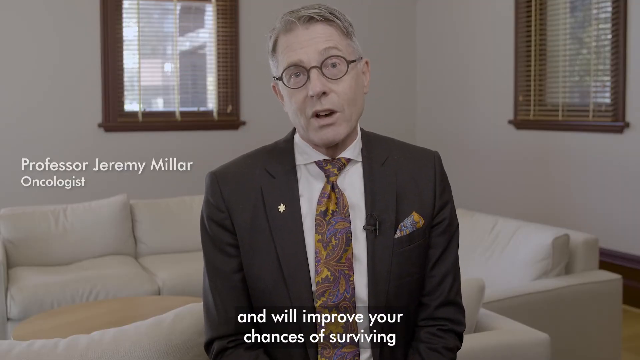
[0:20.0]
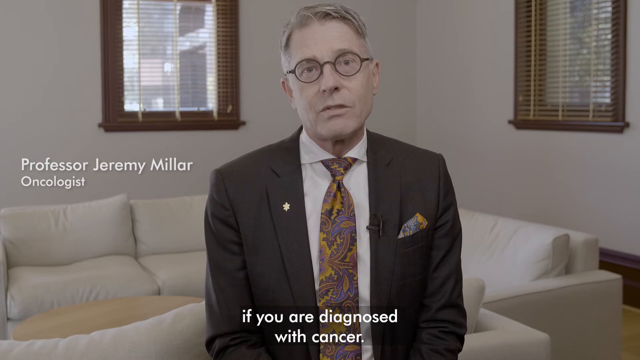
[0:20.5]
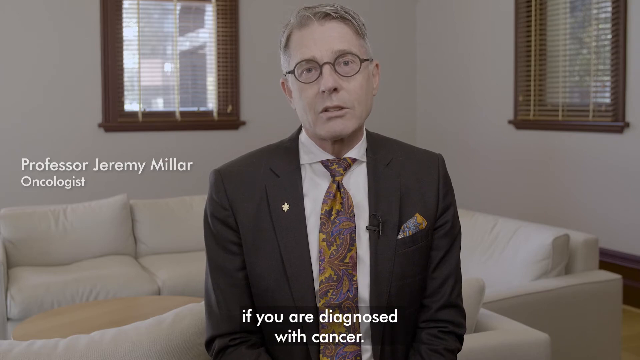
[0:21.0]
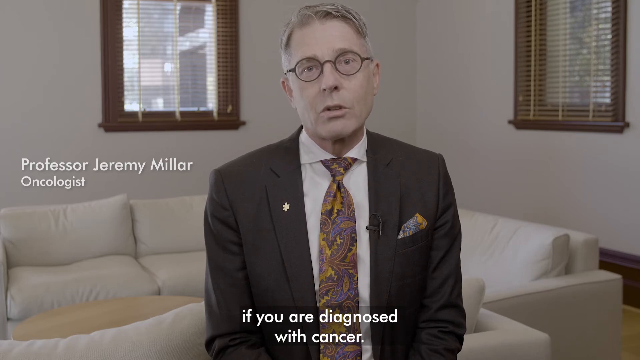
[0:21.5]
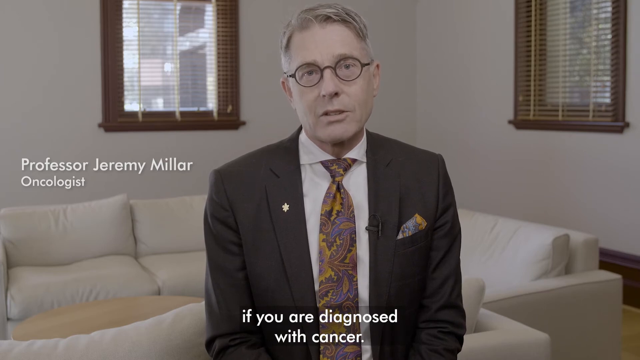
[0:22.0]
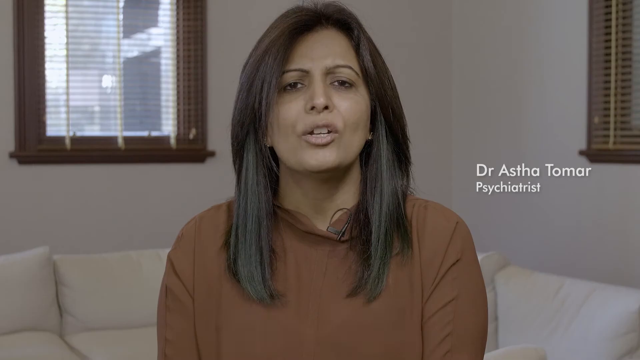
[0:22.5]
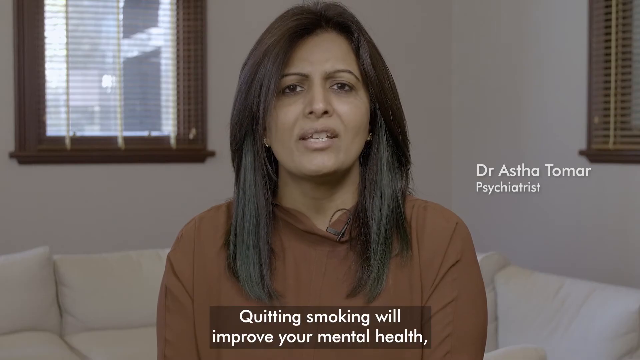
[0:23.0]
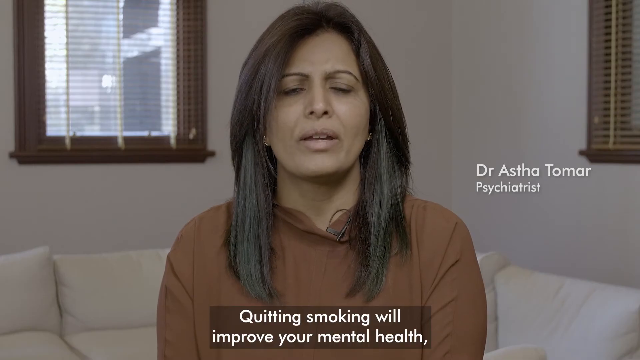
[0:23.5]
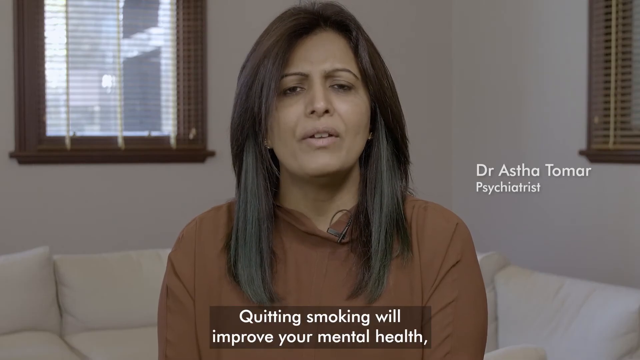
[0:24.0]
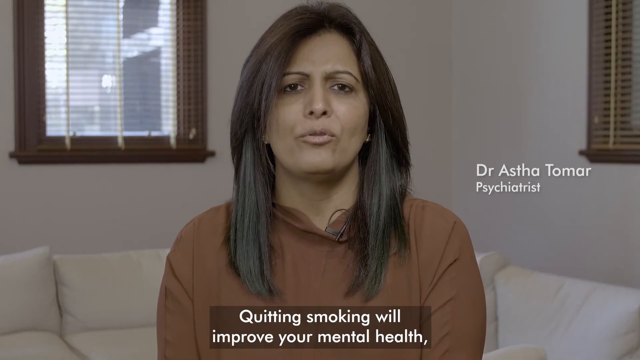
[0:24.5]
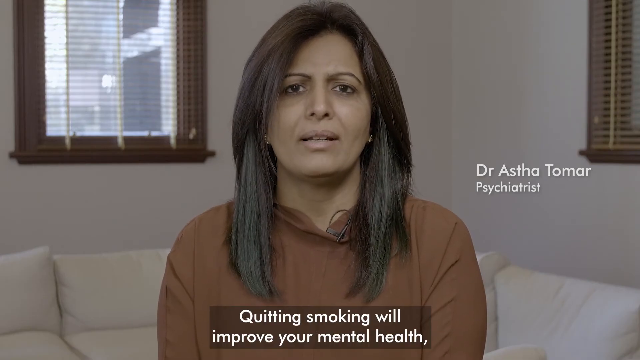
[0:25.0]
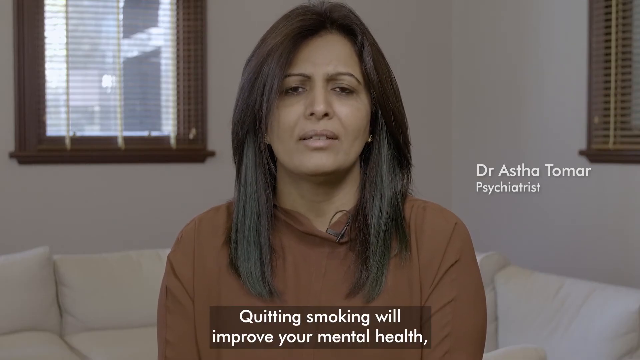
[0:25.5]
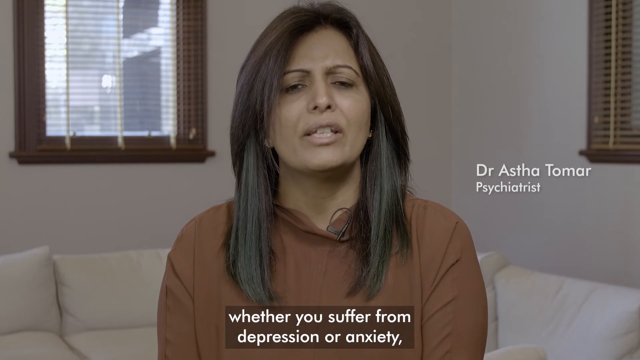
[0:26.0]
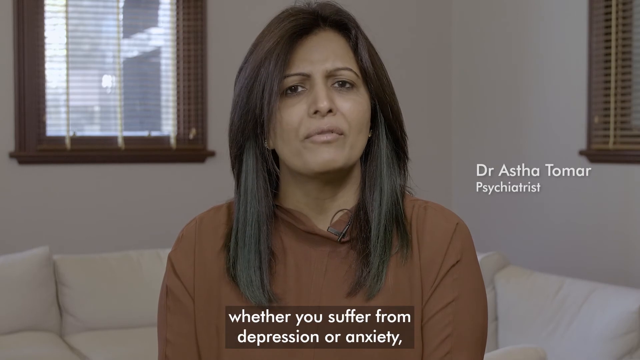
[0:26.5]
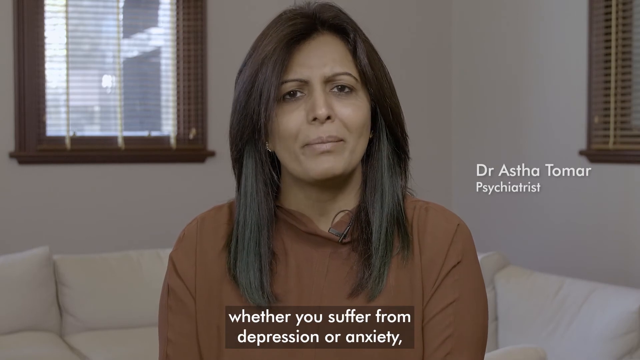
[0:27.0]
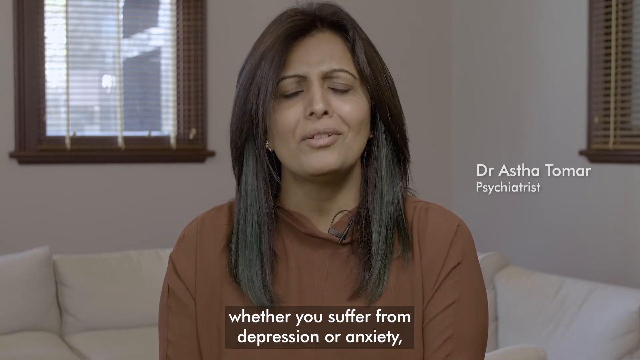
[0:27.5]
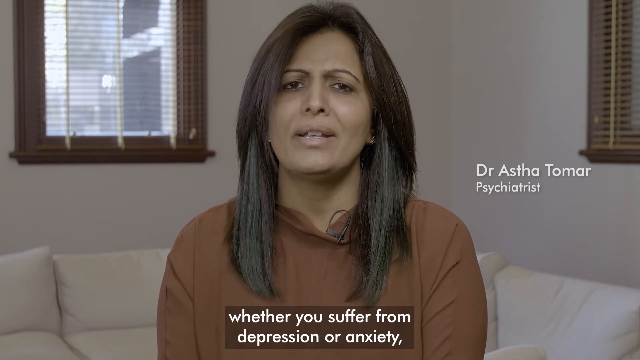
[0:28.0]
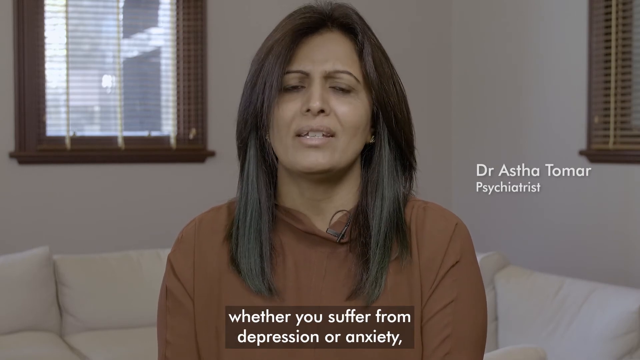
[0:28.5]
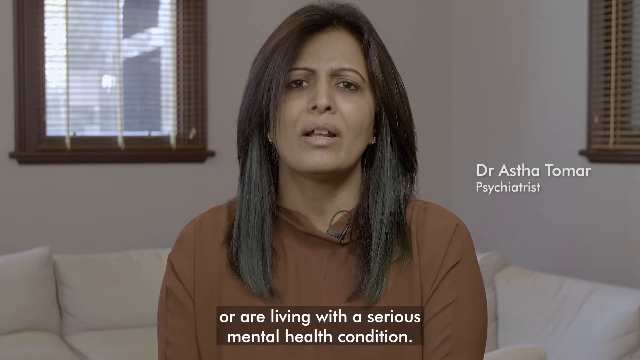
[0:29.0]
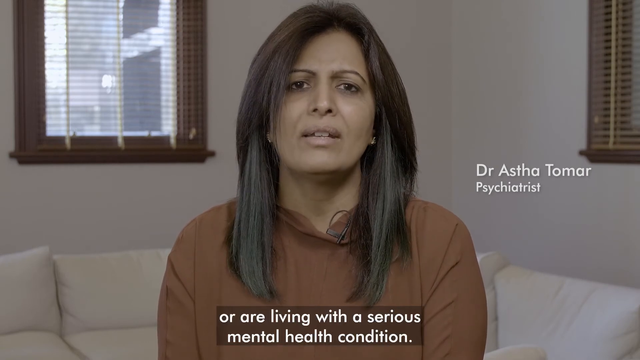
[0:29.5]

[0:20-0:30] A man sits in a comfortable room facing the camera and speaking. White text to his left reads "Professor Jeremy Millar" and beneath it "Oncologist." Captions at the bottom read "and will improve your chances of surviving if you are diagnosed with cancer." The video switches to a woman with dark hair and a brown shirt sitting in a comfortable room, facing the viewer and speaking. White text to the right gives her name, "Dr Astha Tomar," and beneath it "Psychiatrist." Her captions read "Quitting smoking will improve your mental health, whether you suffer from depression or anxiety, or are living with a serious mental health condition."